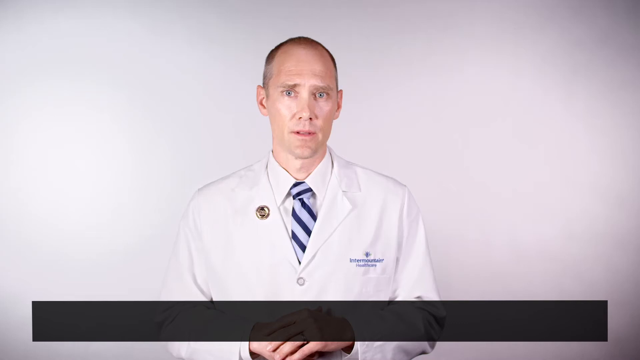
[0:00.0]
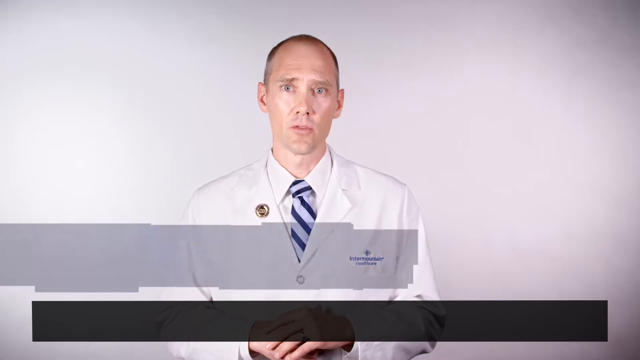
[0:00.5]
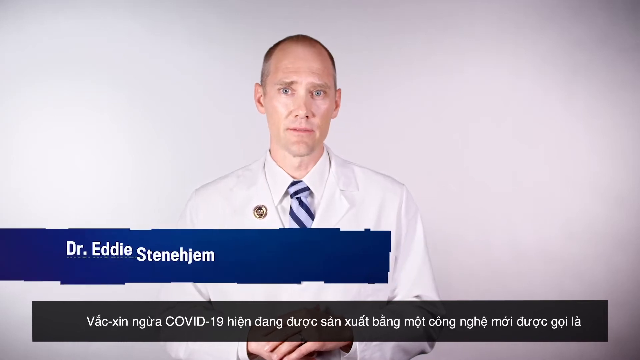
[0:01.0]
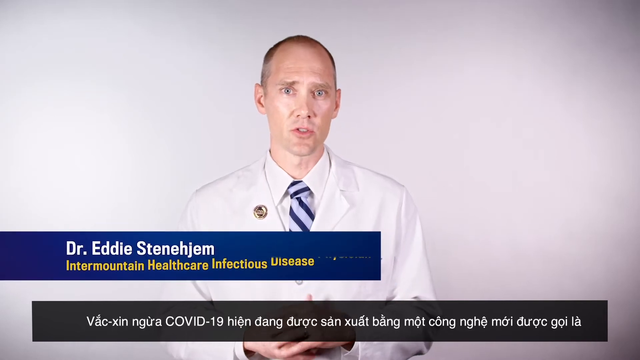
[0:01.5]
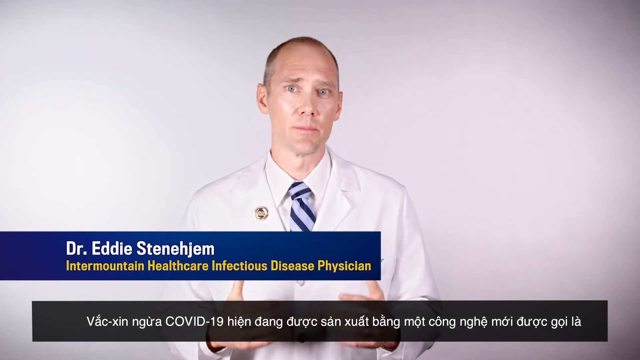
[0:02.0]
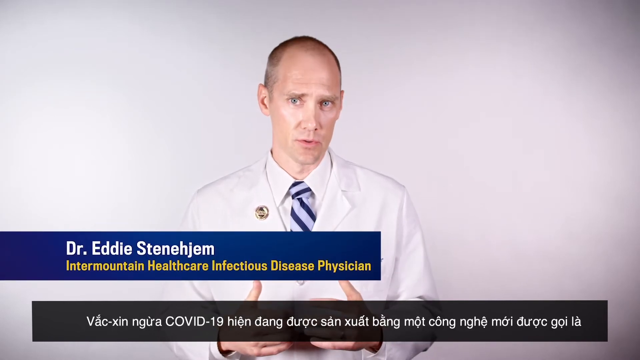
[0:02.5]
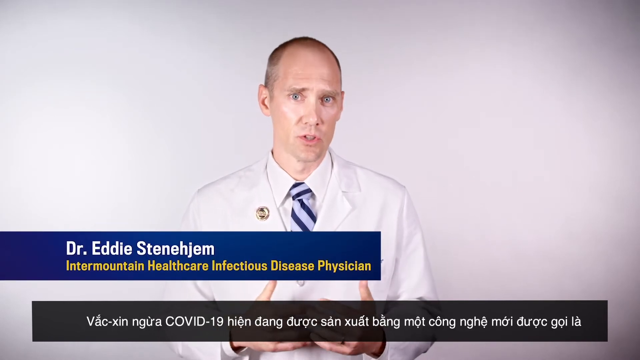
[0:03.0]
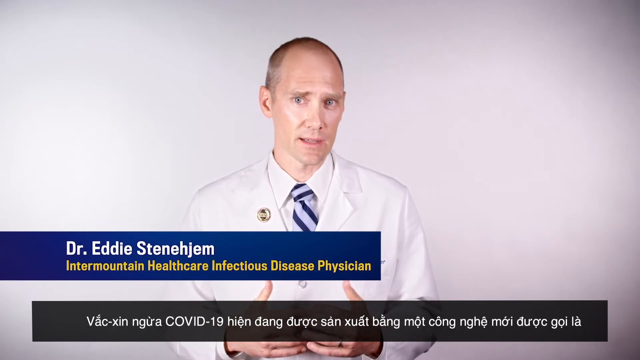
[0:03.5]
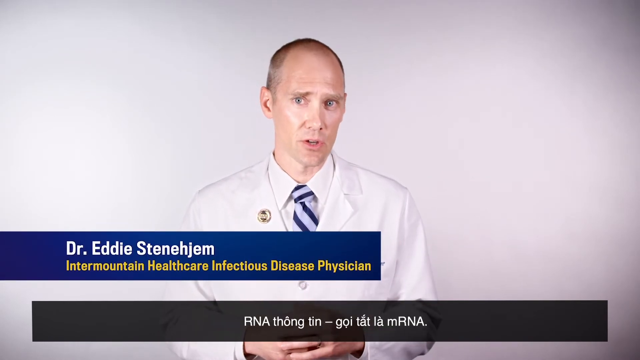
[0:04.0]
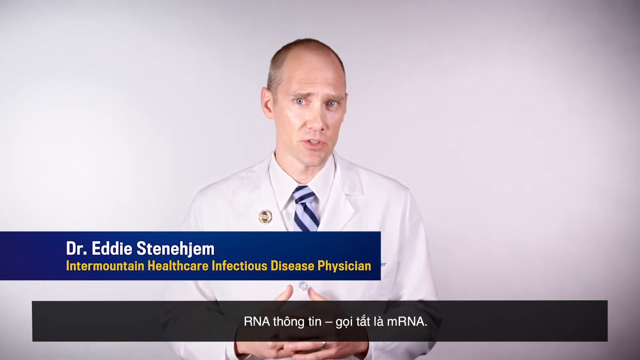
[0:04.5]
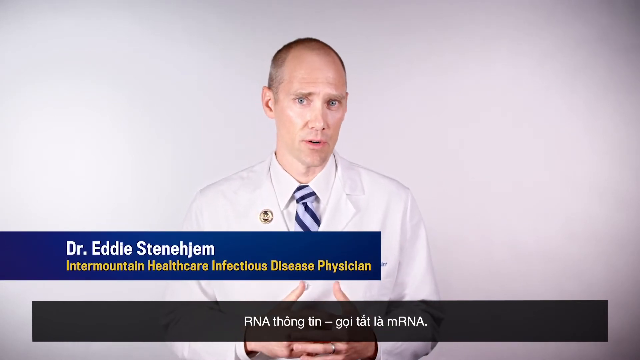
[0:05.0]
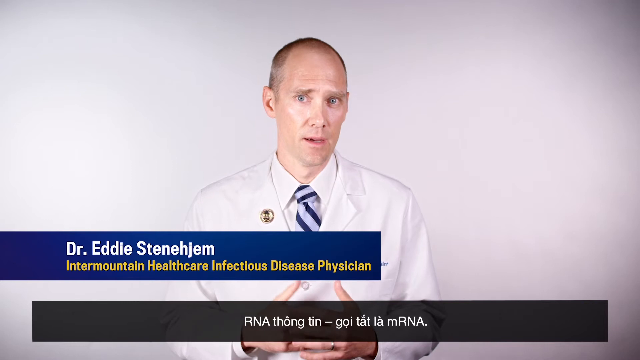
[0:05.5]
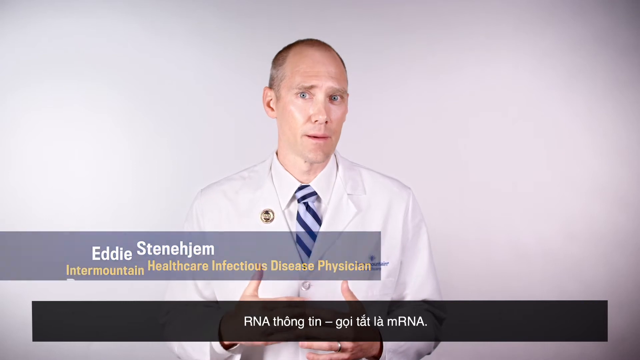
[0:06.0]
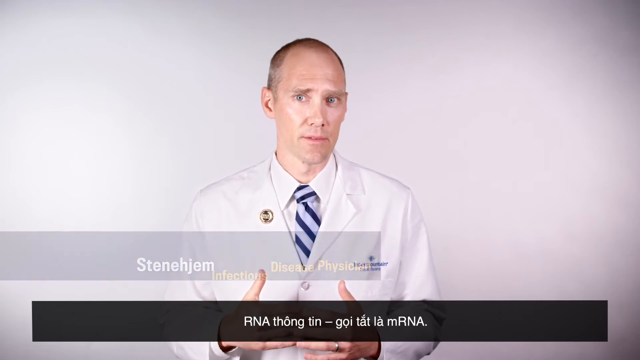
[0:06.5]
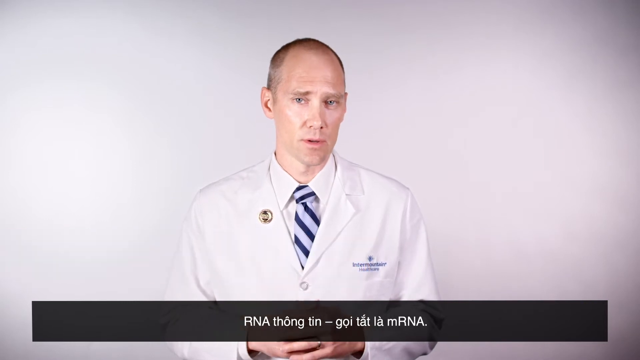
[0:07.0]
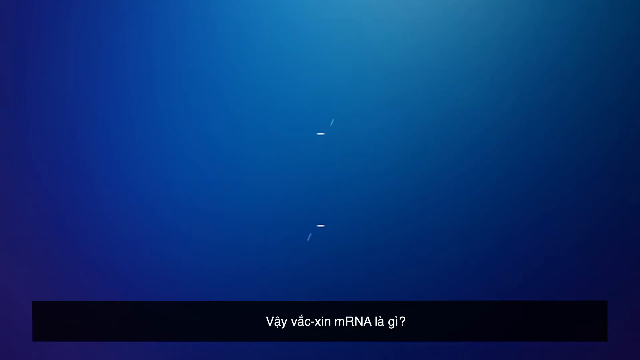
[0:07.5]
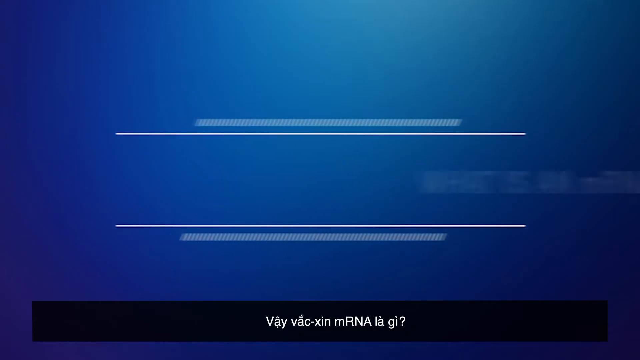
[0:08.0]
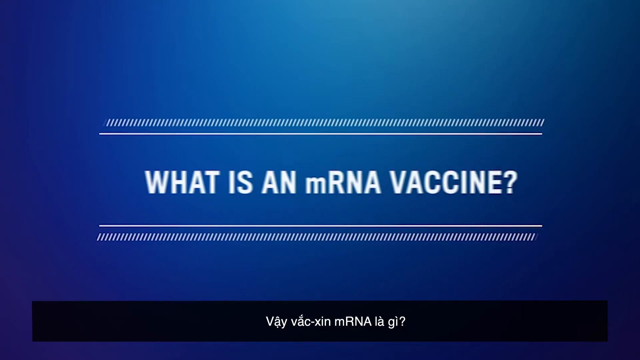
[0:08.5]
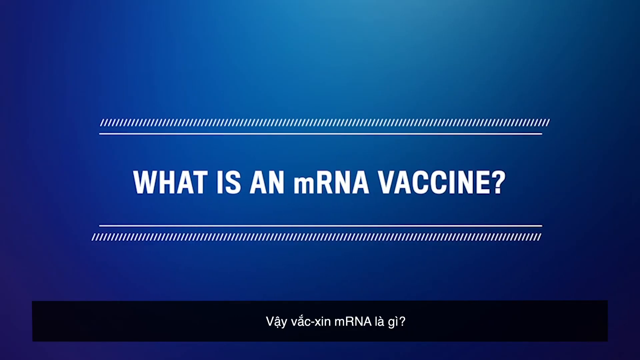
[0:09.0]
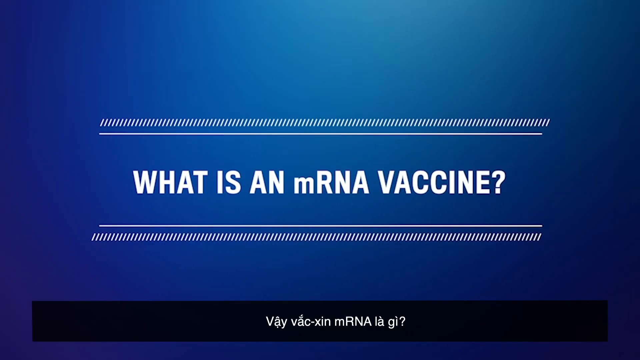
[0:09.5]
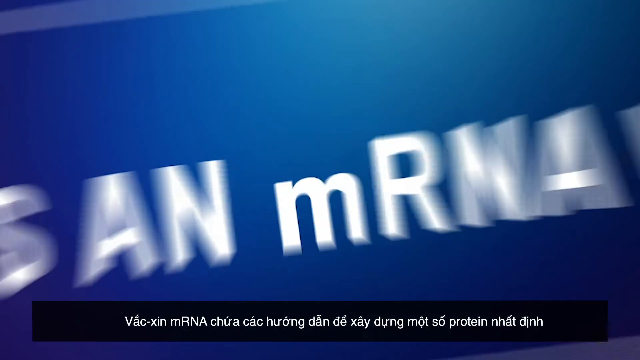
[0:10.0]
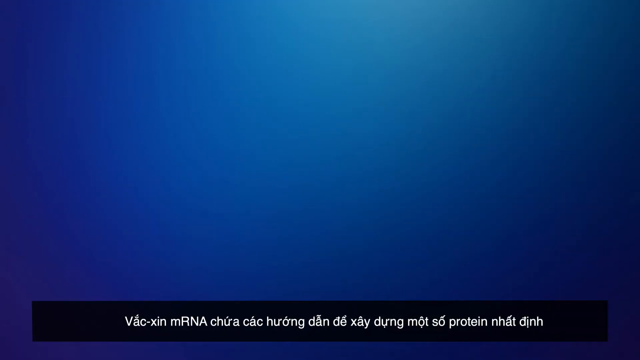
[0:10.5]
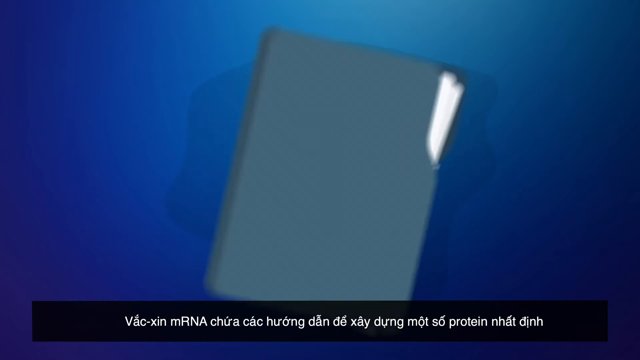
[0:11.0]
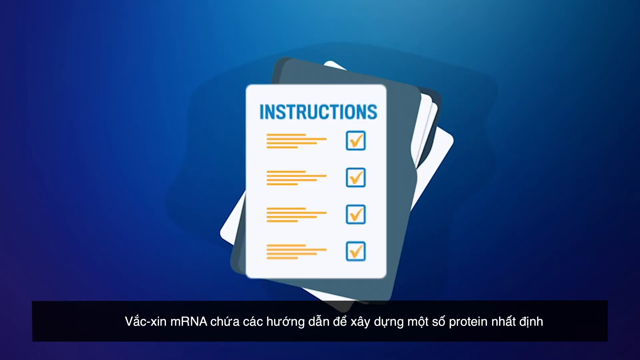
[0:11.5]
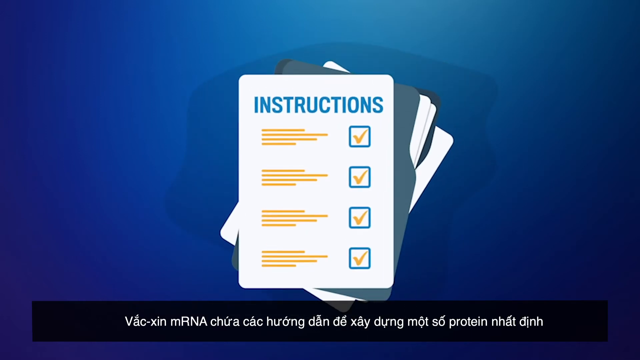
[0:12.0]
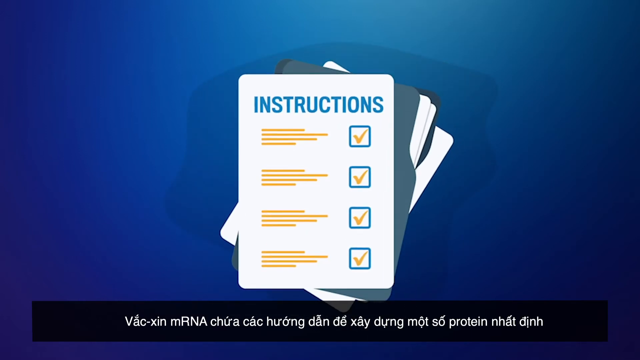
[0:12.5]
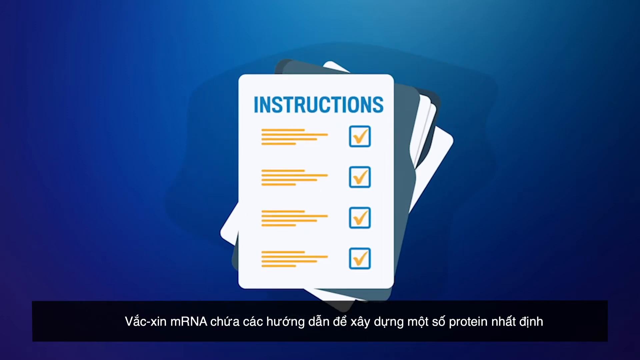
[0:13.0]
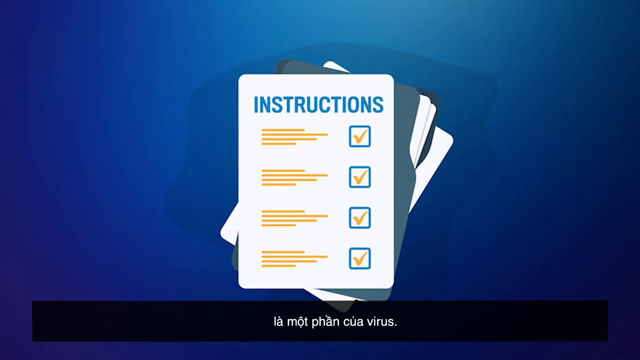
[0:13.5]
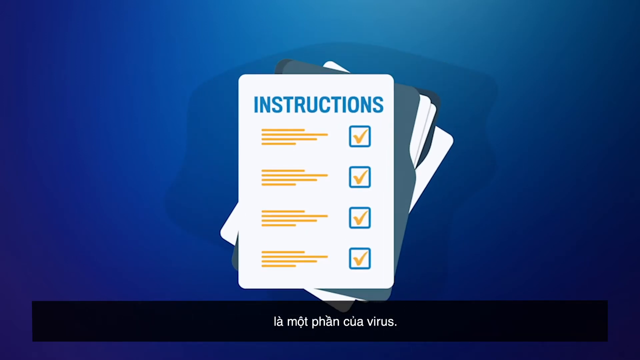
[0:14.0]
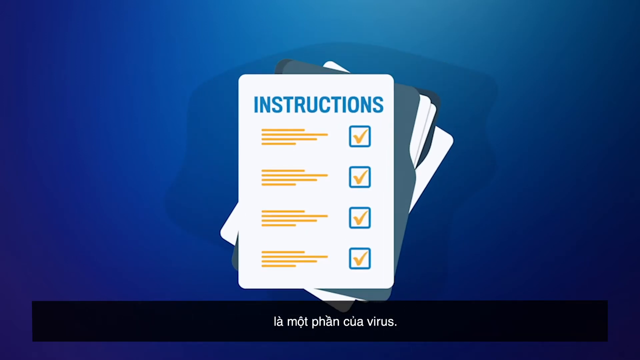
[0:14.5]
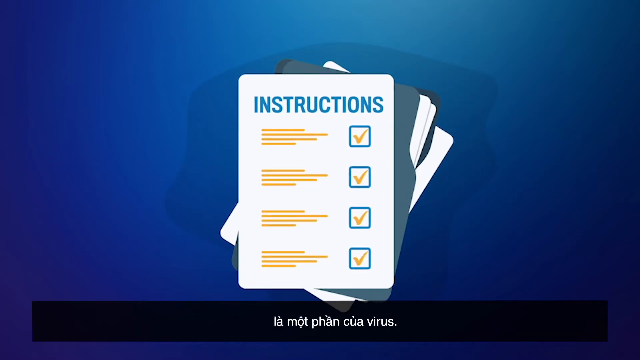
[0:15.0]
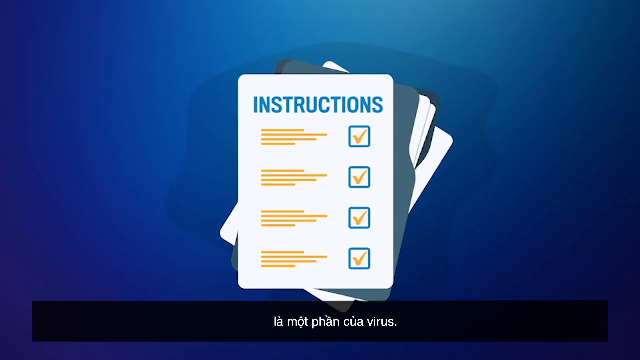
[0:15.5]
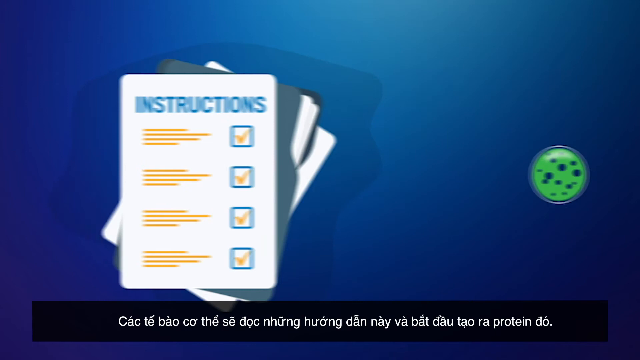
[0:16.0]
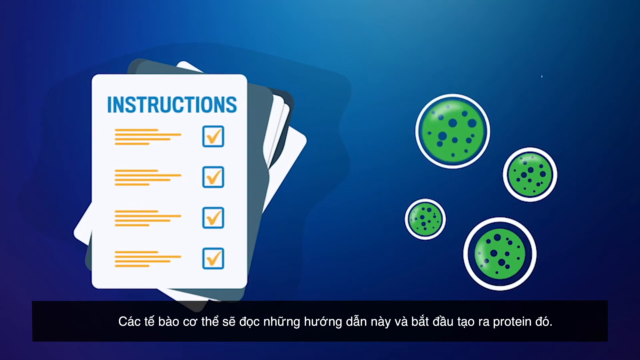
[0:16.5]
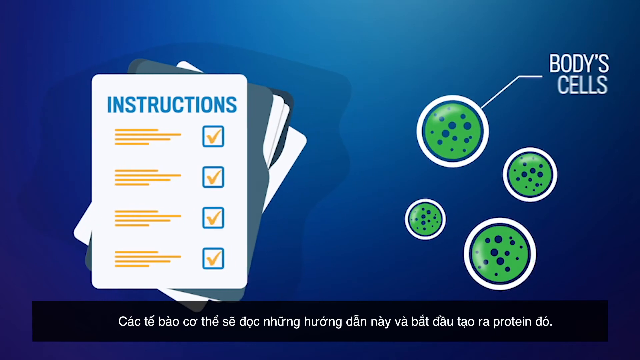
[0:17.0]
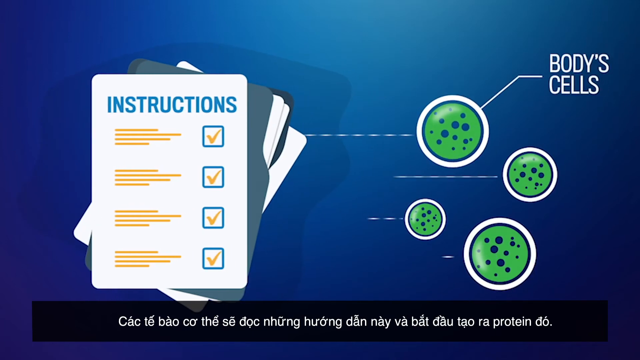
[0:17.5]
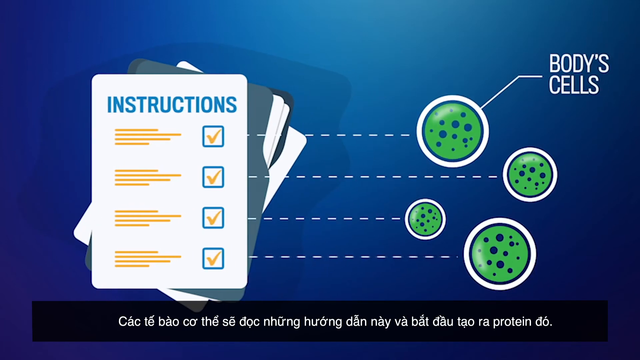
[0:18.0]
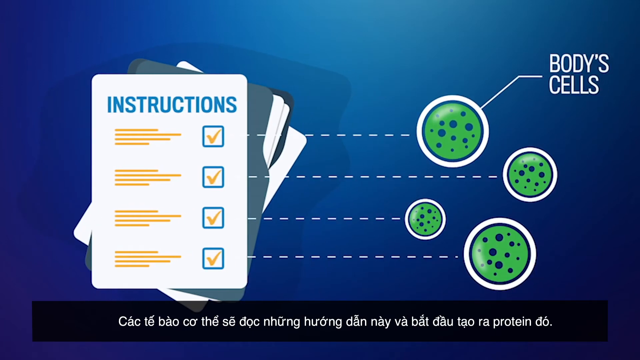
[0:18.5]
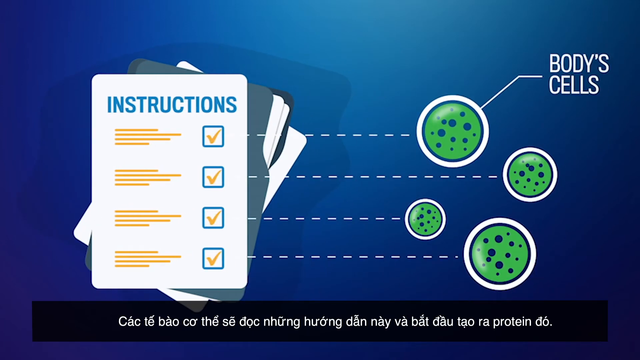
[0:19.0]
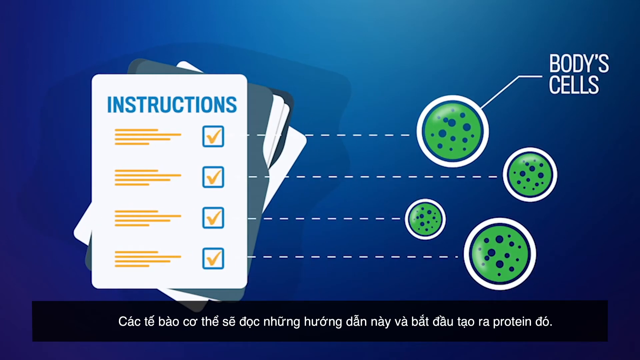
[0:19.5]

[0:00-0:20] Against a white background, a man with very short light brown hair stands in the middle of the screen. He wears a white doctor's coat that reads "Intermountain Healthcare" over his left chest, and a dark blue and light blue striped tie. A blue rectangular box pops up on the left side of the screen reading "Dr. Eddie Stenehjem", with "Intermountain Healthcare Infectious Disease Physician" underneath. He talks to the camera, and along the bottom of the screen a long black rectangular box holds captions that appear to be in Vietnamese or some other foreign language. The screen then changes to a blue background with the text "What is an mRNA vaccine?" A clip-art-style graphic appears that looks like a folder with lots of papers inside; the paper on top says "Instructions" and has a few paragraphs of text with check boxes next to them, all of them checked. That graphic slides to the left, and on the right appears a graphic of green circles with small dark blue spots on them. A line comes from one of them, and next to it the text reads "bodies, cells". Dashed lines then run from four of the circles to the check marks on the graphic on the left.